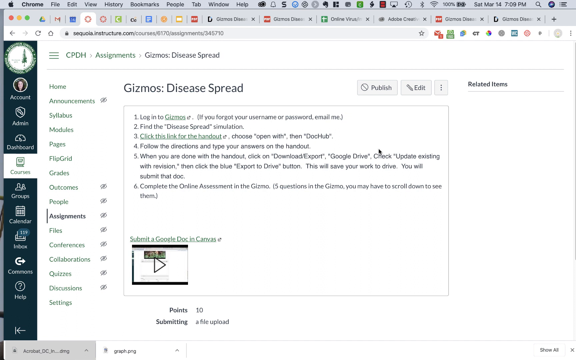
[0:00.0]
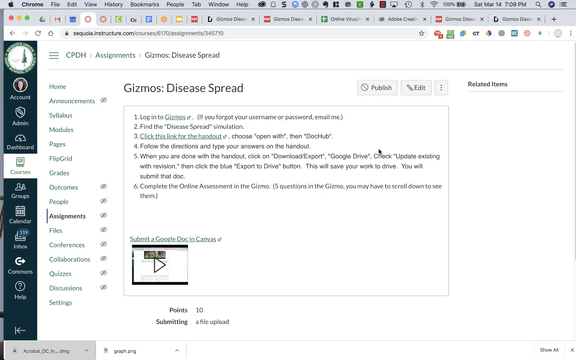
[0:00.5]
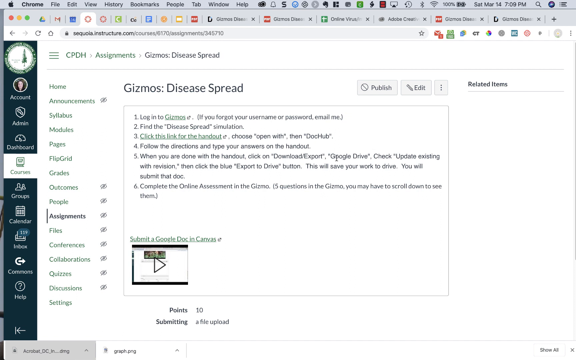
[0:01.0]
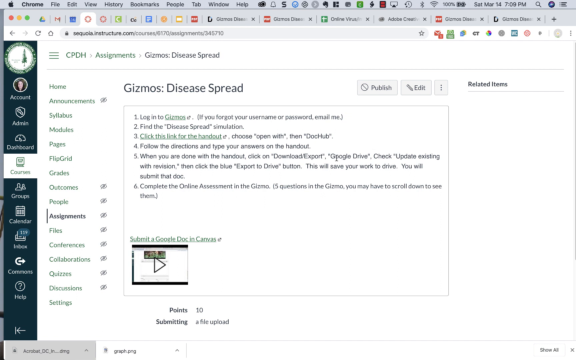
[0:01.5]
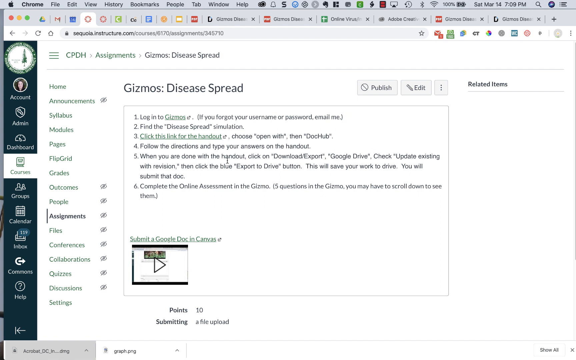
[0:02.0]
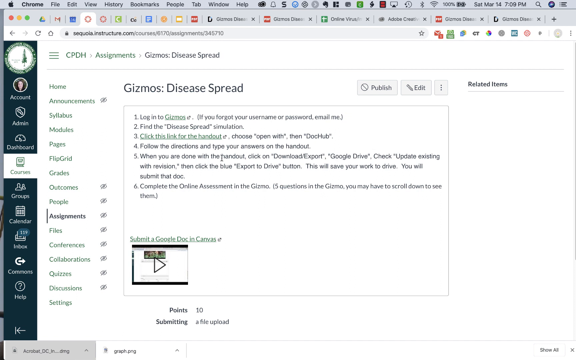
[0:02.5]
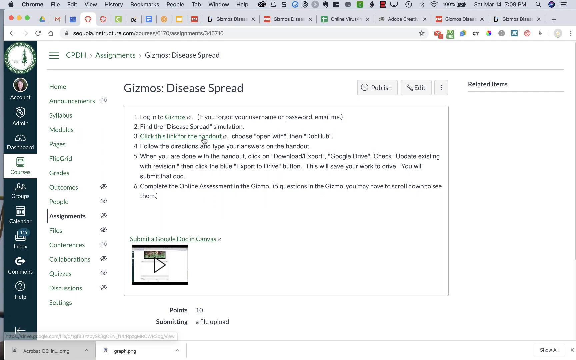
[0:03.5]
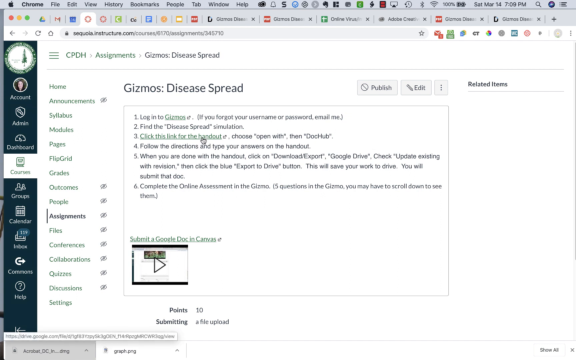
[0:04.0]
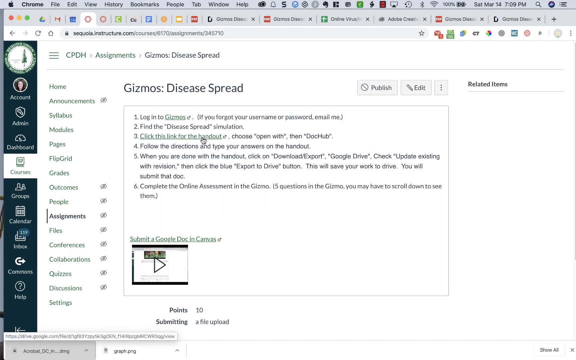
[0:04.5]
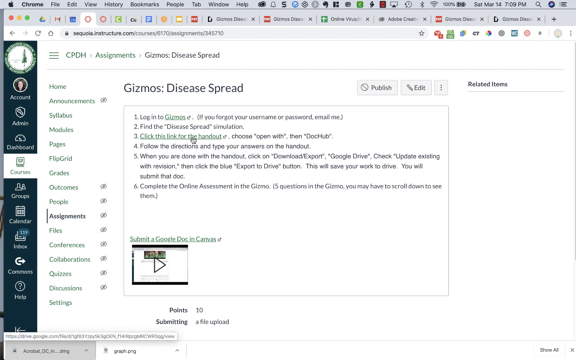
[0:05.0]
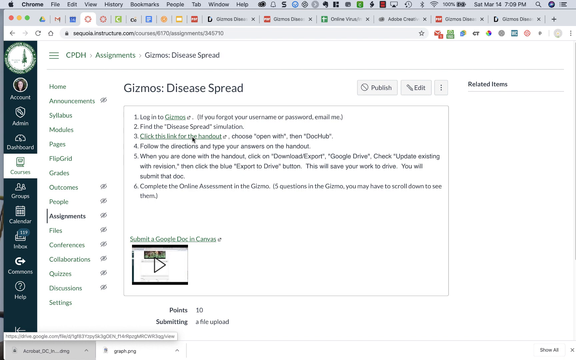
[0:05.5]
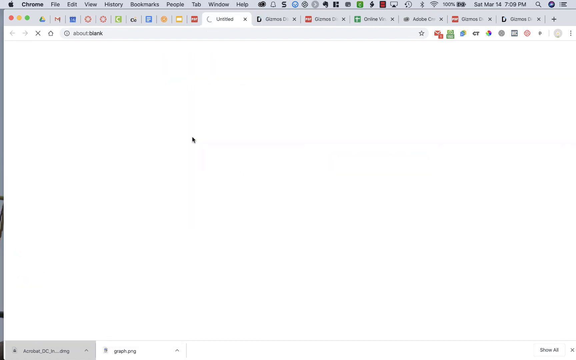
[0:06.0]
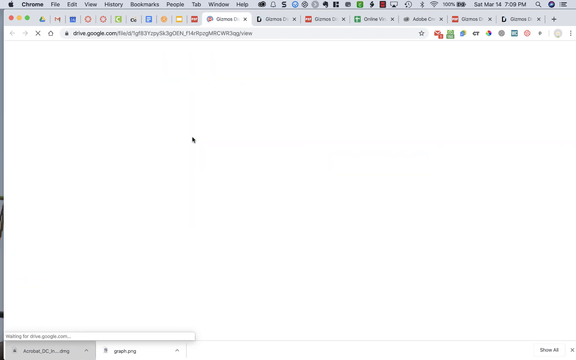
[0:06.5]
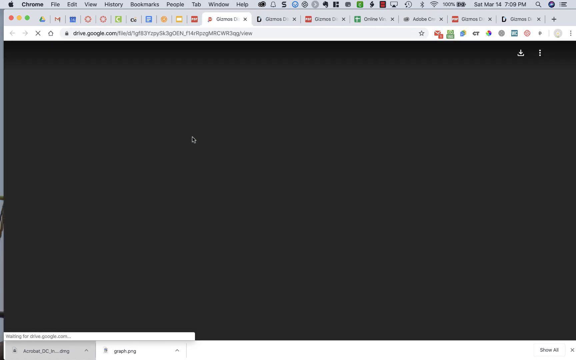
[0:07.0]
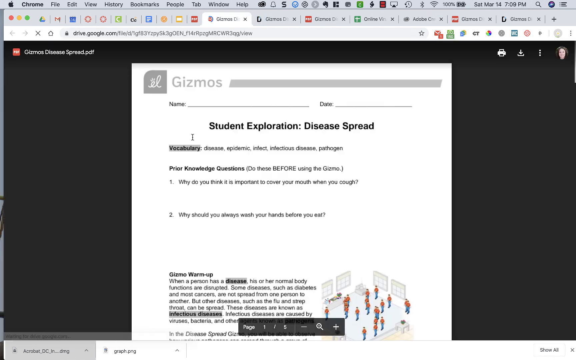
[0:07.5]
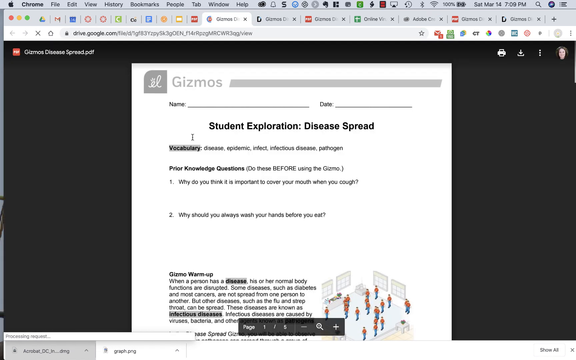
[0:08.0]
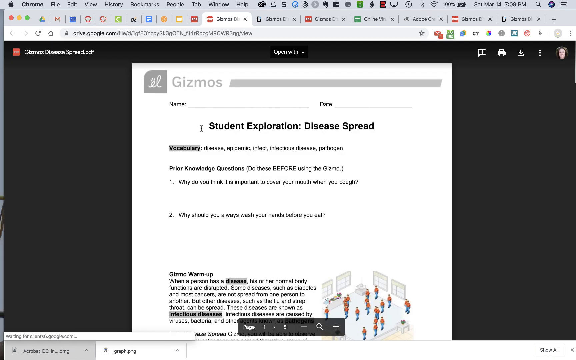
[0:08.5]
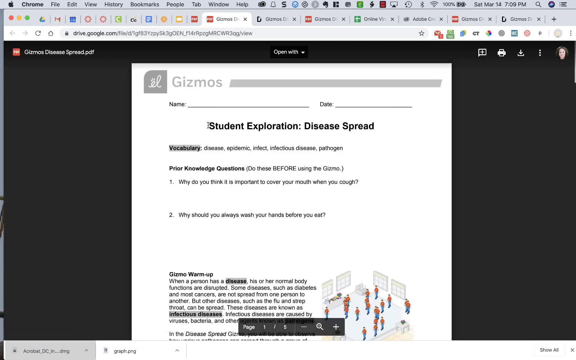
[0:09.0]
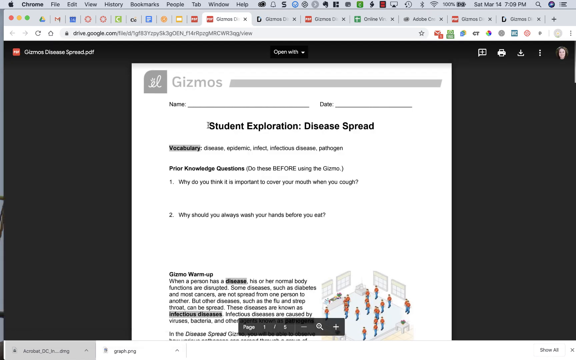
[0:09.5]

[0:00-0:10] A screen is shown, apparently on an Apple MacBook. A website for sequoia.instructure.com is open, with text that says "CPDH assignment, gizmos, disease spread." There are categories including home, announcements, syllabus, modules, pages, flip grid, grades, outcomes, people, assignments, files, conferences, collaborations, quizzes, discussions, and settings. A bar on the left side lists account, admin, dashboard, courses, groups, calendar, inbox, commons, and help, with courses currently selected. The main page has text that says "gizmos disease spread. One, log into gizmos. If you forgot your username or password, email me. Two, find the disease spread simulation. Three, click the link for the handout. Choose open with then doc hub. Four, follow the directions and type your answers on the handout. Five, when you are done with the handout, click on download exports, google drive, check update existing with revision, then click the blue export to drive button. This will save your work to drive. You will submit that doc. Six, complete the online assessment in the gizmo. Five questions in the gizmo. You may have to scroll down to see them." There is a video that says "submit a google doc in canvas," text that says "points 10 submitting a file upload," and buttons that say "publish" and "edit." A mouse moves on the screen and goes over to step three, "click this link for the handout." The link is clicked, which opens Google Drive, where a PDF that says "student exploration disease spread" is visible.